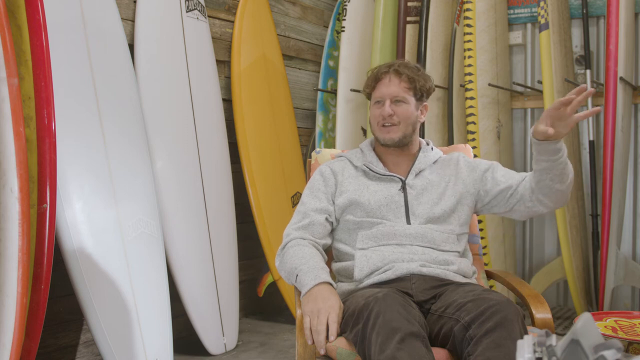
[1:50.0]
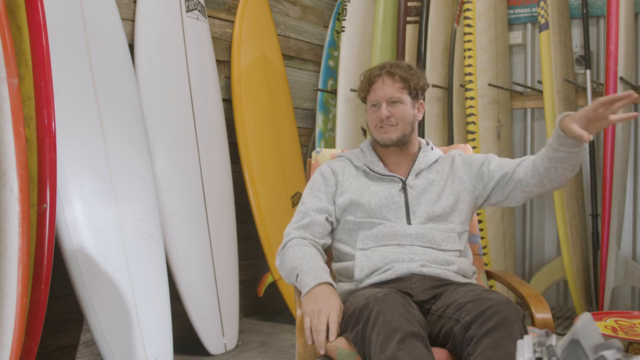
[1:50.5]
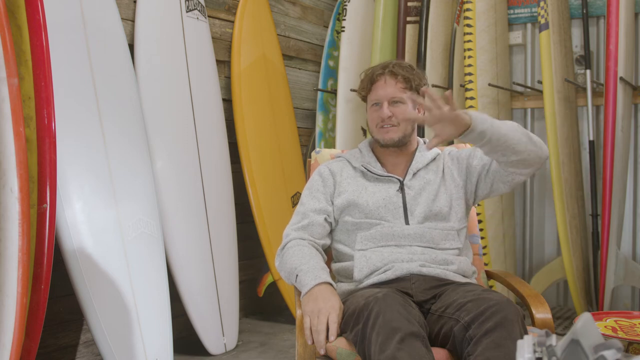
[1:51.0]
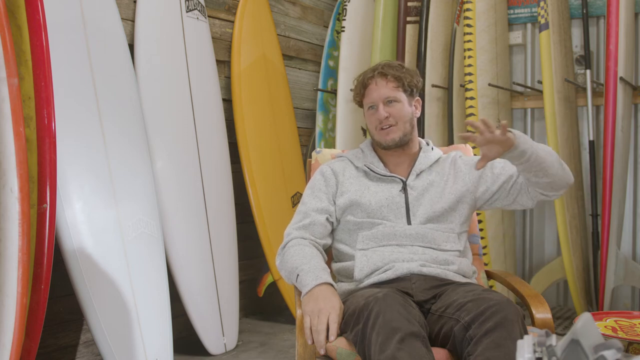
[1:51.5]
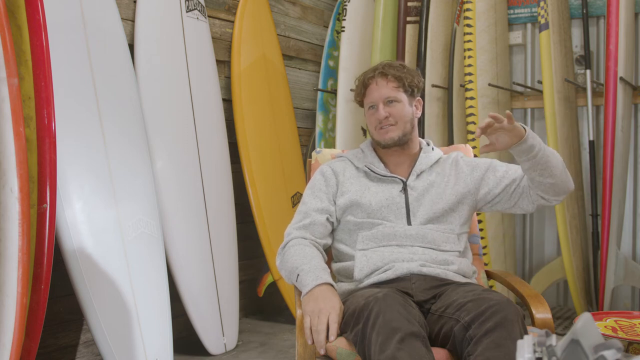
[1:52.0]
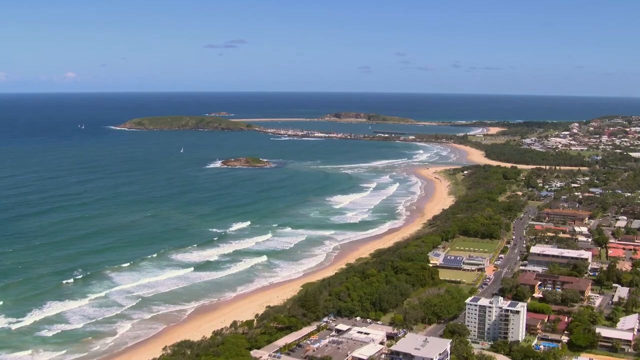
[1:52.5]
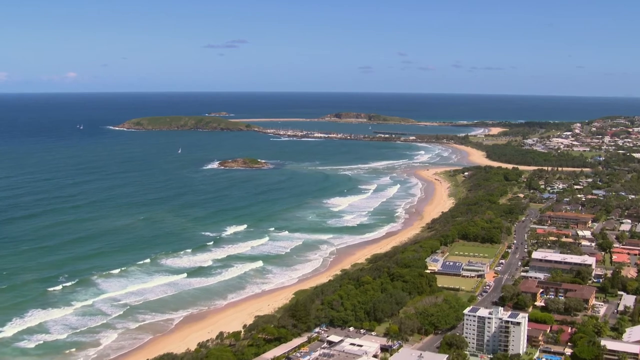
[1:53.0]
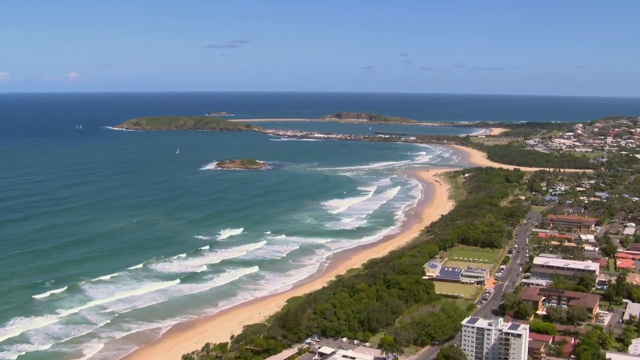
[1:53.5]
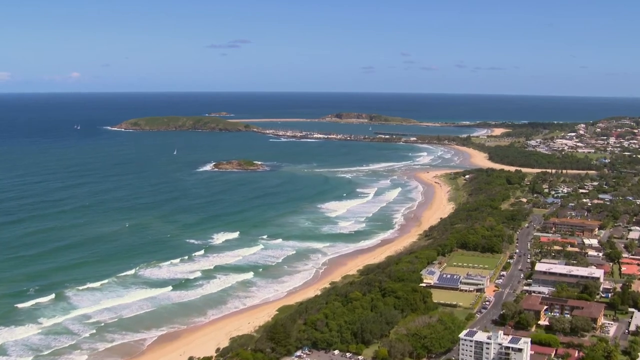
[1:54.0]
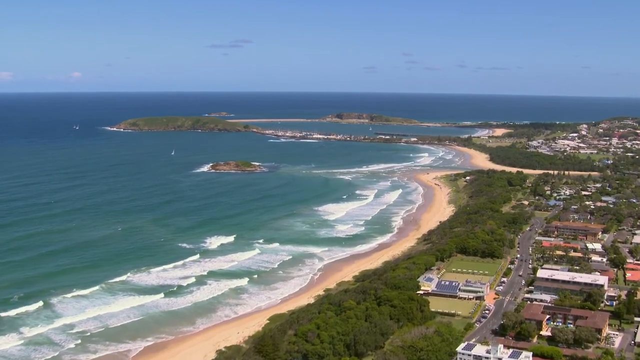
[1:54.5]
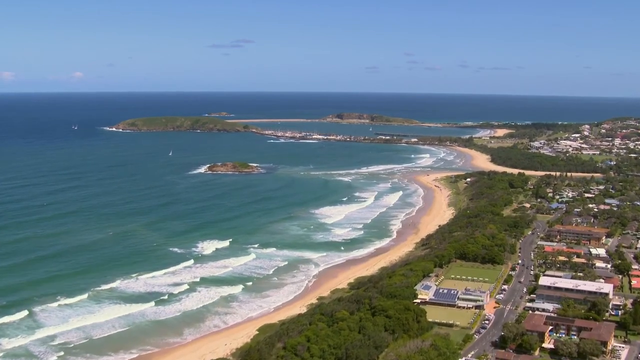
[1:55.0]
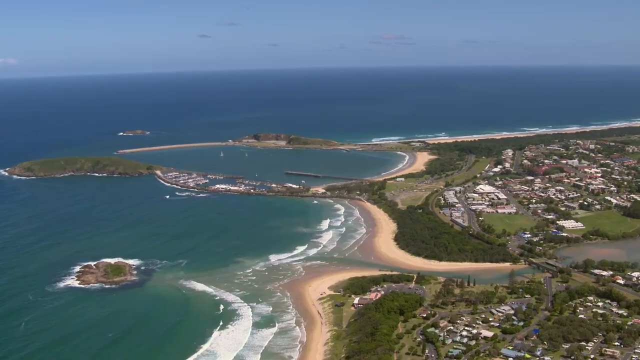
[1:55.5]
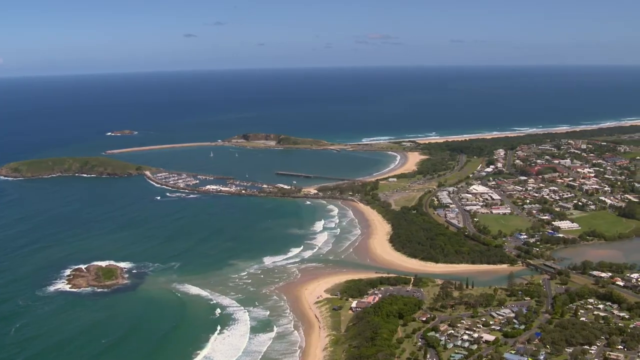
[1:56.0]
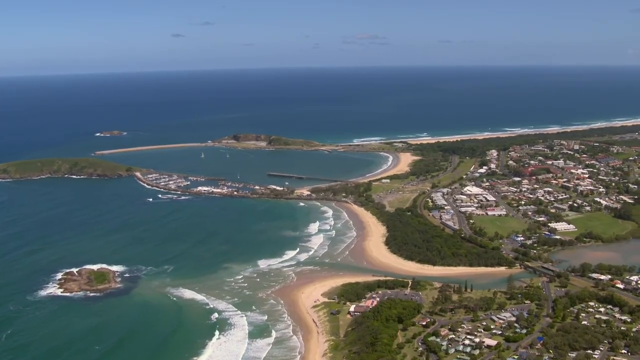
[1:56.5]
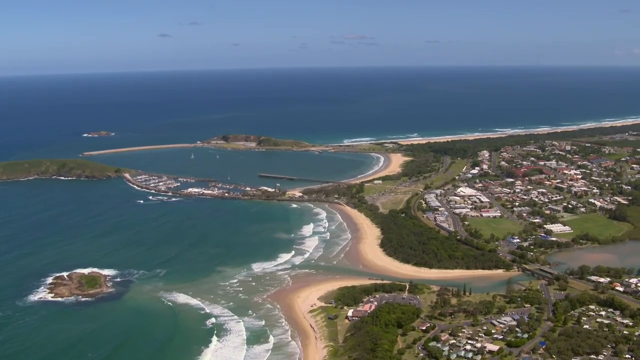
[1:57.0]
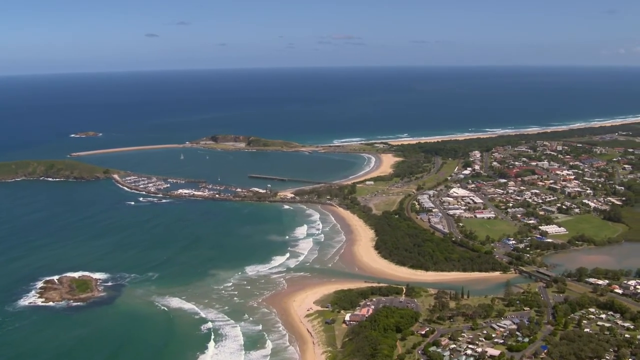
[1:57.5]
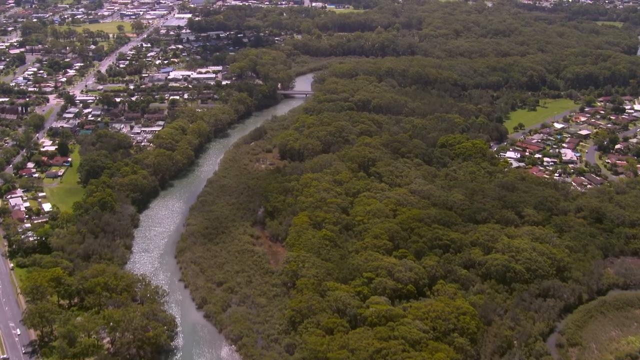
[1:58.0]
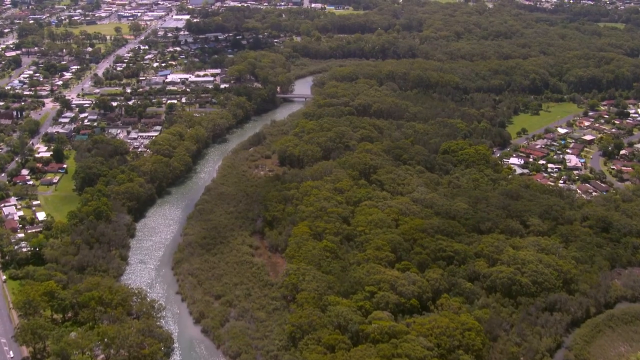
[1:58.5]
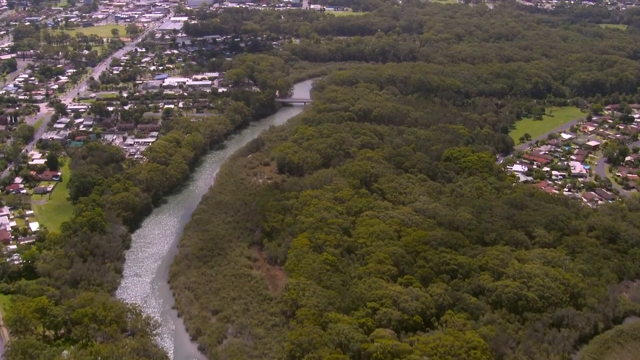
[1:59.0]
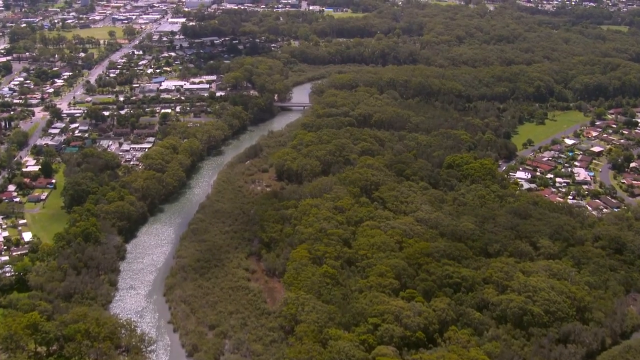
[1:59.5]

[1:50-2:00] The man sitting in front of the surfboards moves one hand in a kind of circle with his palm out. Aerial views follow of the beach that seems to be more in town, with roads and houses, though there appears to be some separation: a very thin layer of woods lies between the town and the beach. In this part of the beach a strip of land seems to form almost a gulf, with a small patch of ocean in between, and there appears to be a dock going into it. The view then shows what may be a river in the town, with a small bridge connecting it to another town on the other side of the woods.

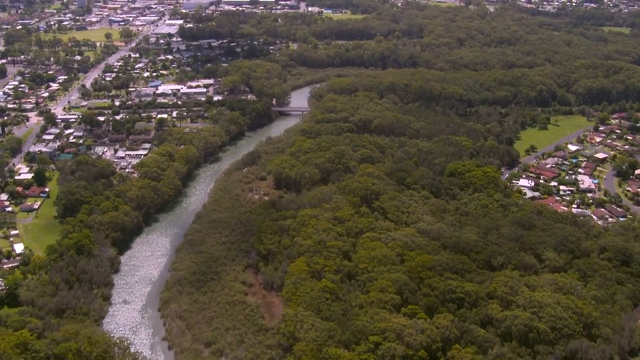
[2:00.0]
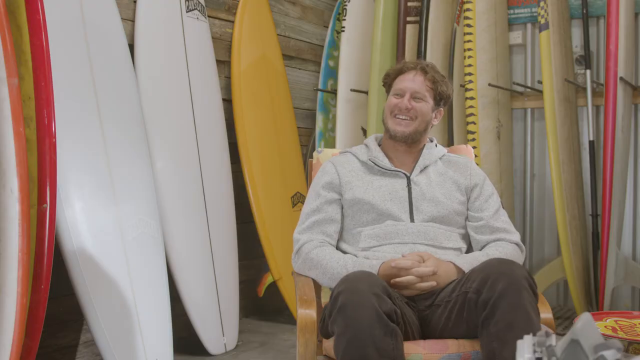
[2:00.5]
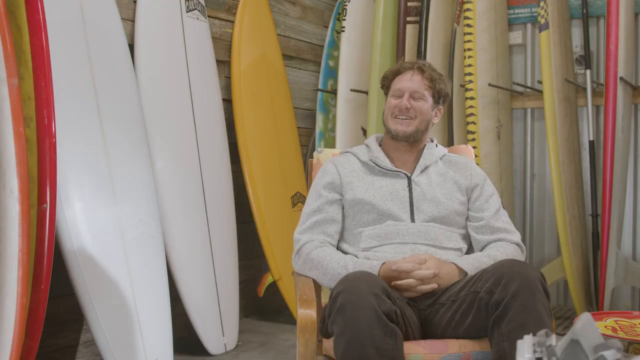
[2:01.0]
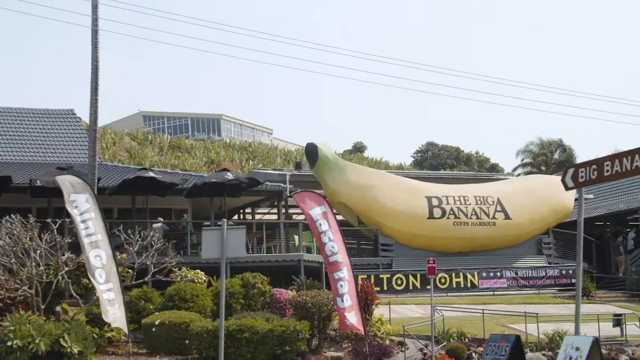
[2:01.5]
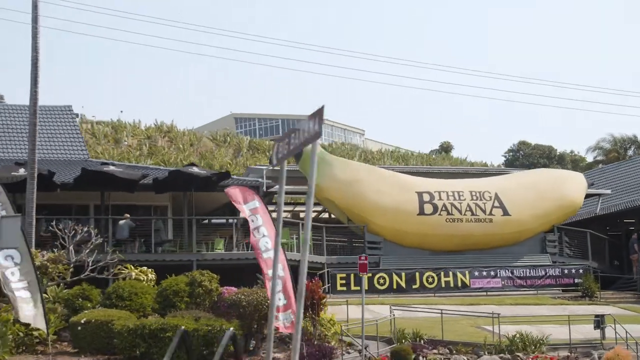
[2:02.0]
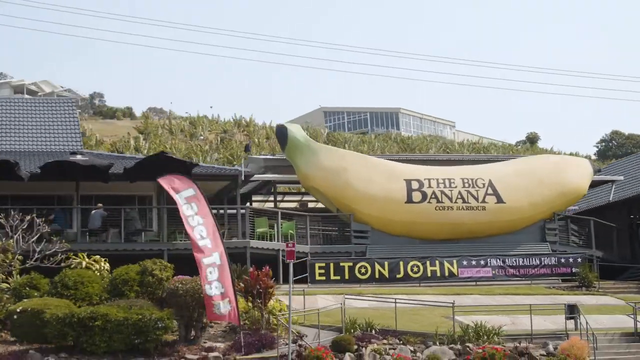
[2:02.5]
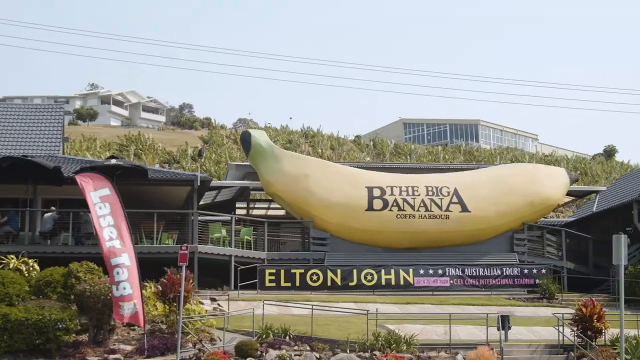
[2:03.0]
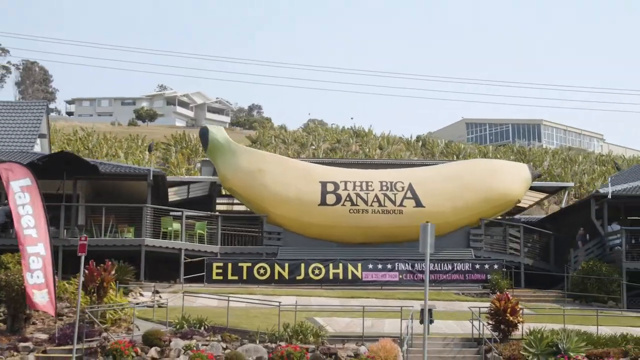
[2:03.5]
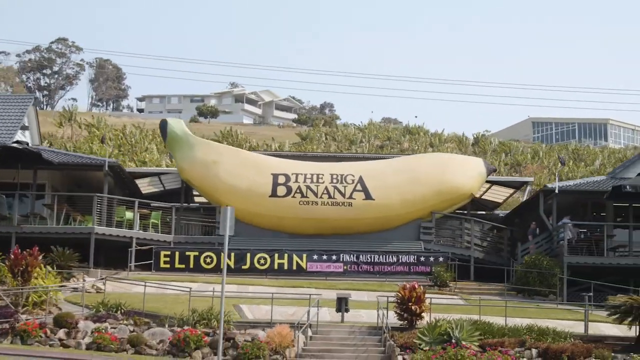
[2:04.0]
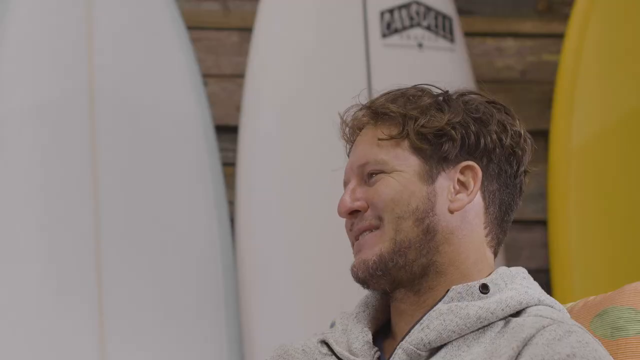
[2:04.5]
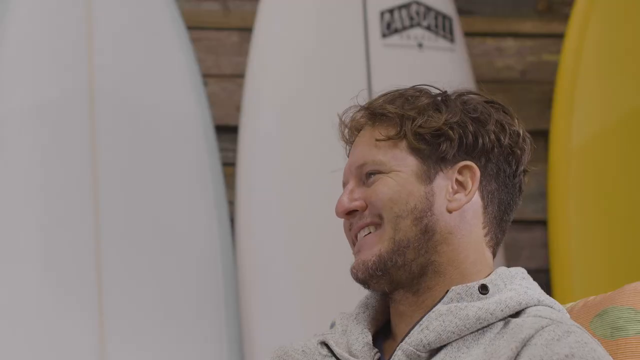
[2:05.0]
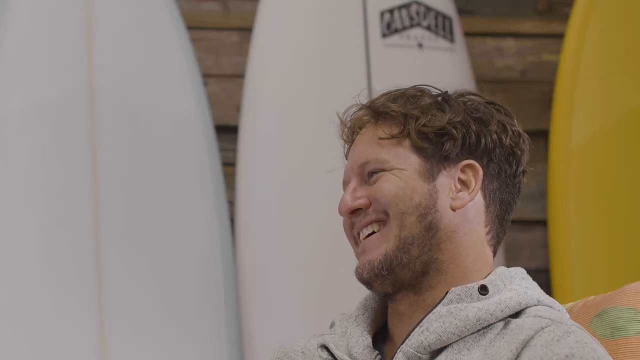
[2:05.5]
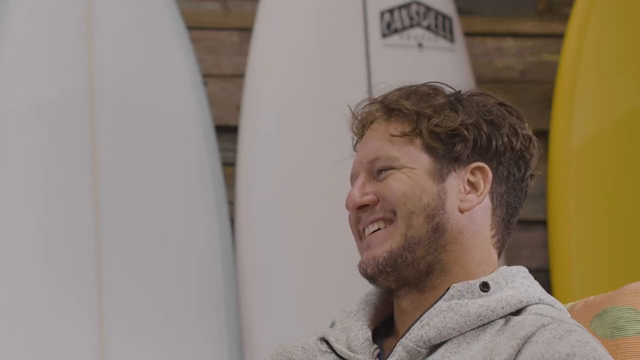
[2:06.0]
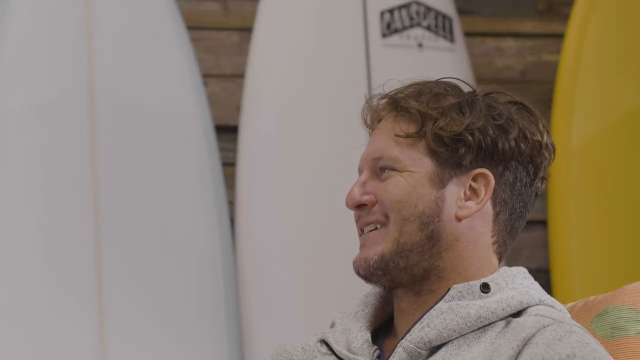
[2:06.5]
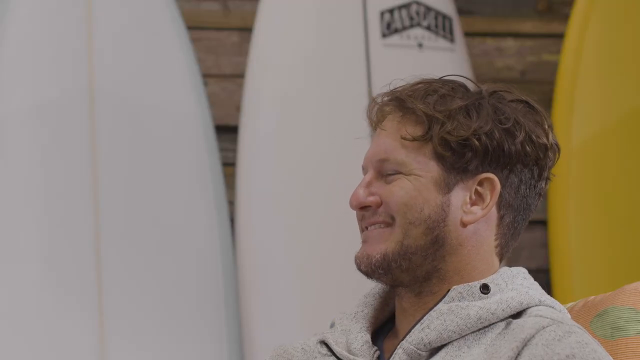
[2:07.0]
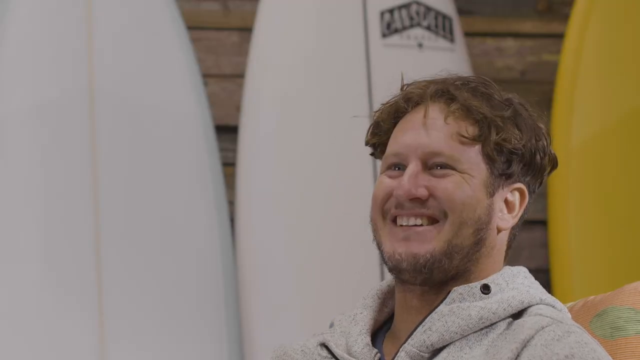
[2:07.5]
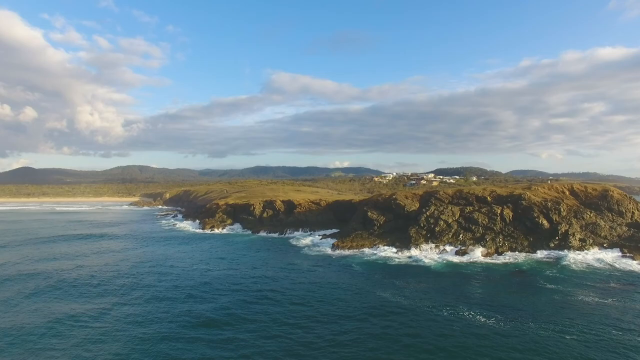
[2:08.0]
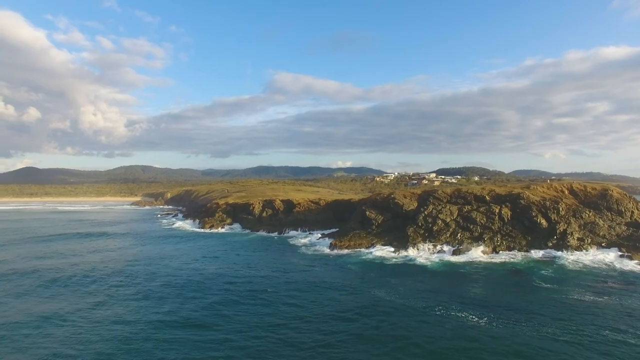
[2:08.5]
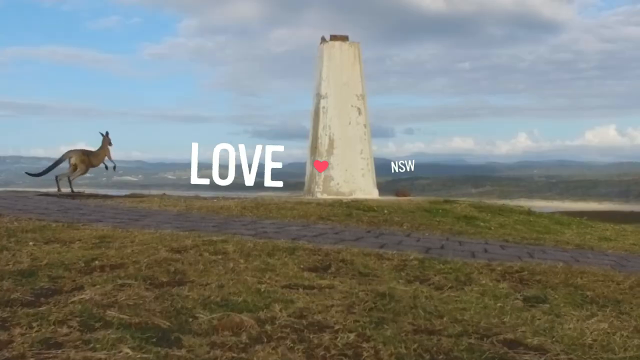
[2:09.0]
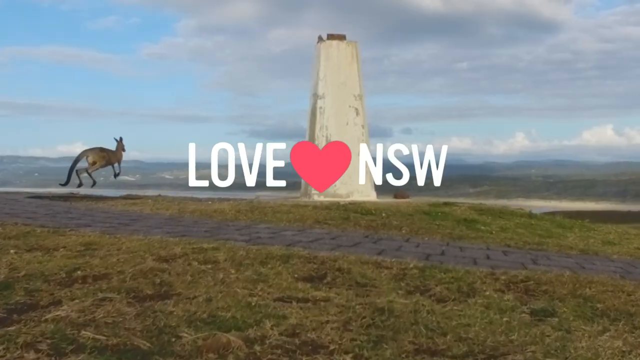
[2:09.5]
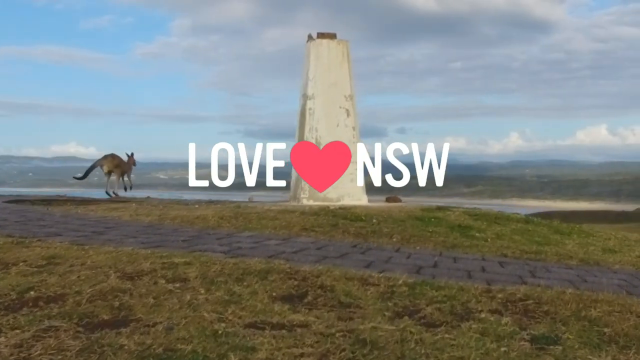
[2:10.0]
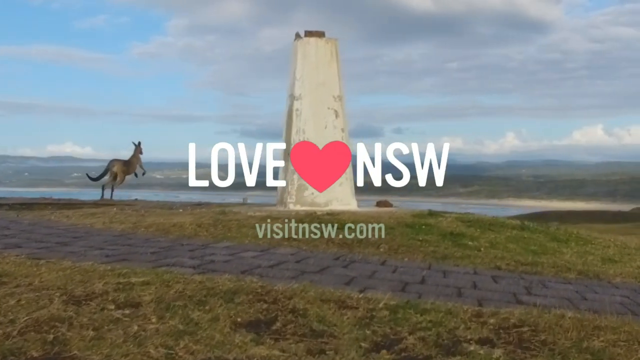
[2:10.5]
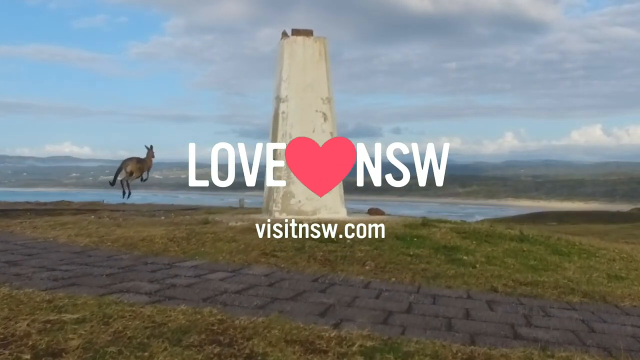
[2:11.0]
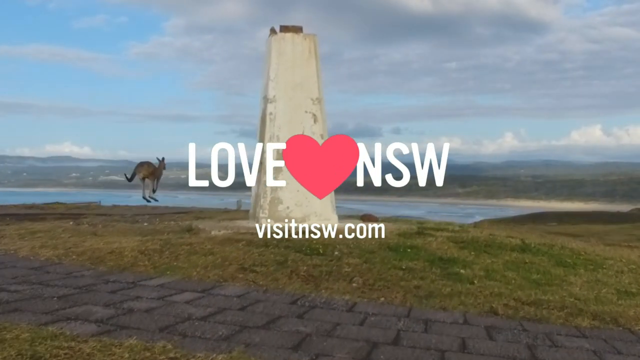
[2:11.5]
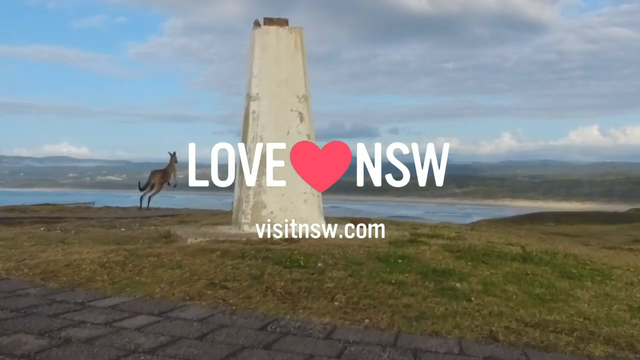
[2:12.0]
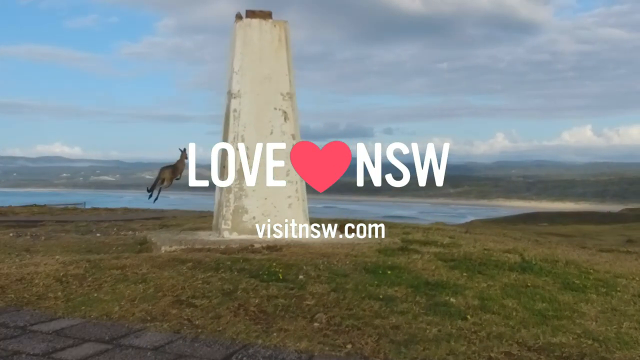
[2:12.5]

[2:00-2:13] Briefly, the man talking in front of the surfboards moves his knees back and forth. Then the view appears to be driving through the town, past a statue of a big banana with "the big banana" written on it in black, and a banner on a fence behind it that says something about Elton John. The man appears again in a side profile zoomed in on his face, apparently laughing and smiling. Another aerial view of a beach follows, then some type of structure that looks maybe 20 feet high, with a walkway that looks like paved bricks, and a kangaroo jumping. The closing text reads "Love NSW" in white with a pink heart between the words, followed by "visit NSW.com".